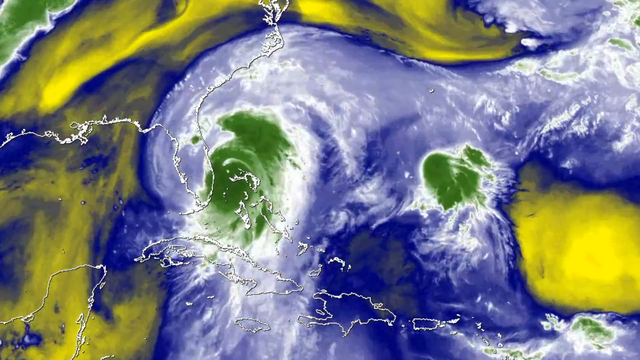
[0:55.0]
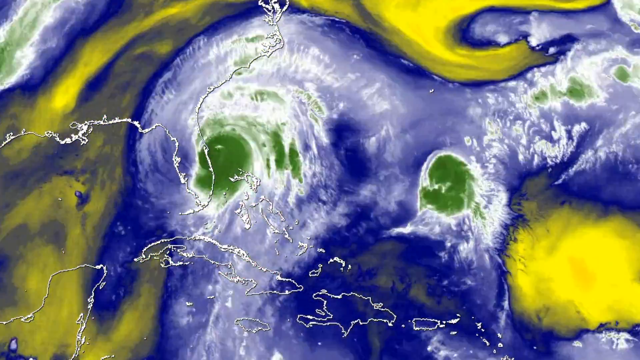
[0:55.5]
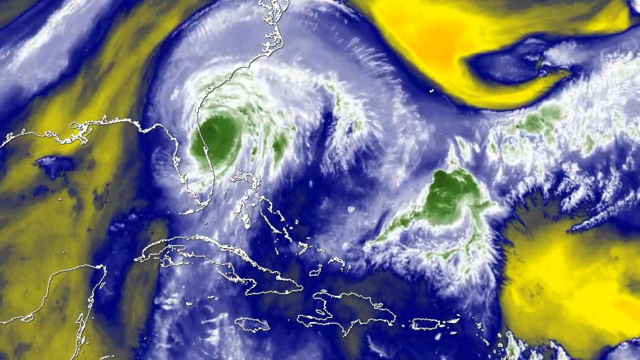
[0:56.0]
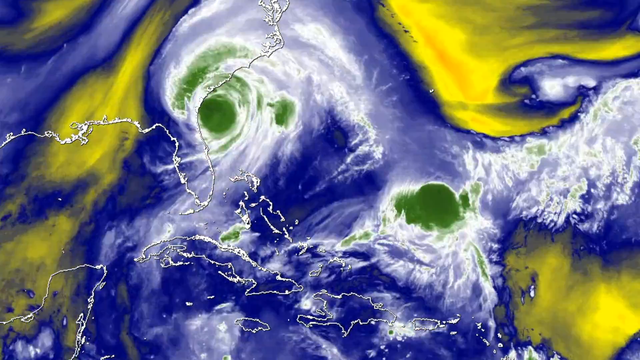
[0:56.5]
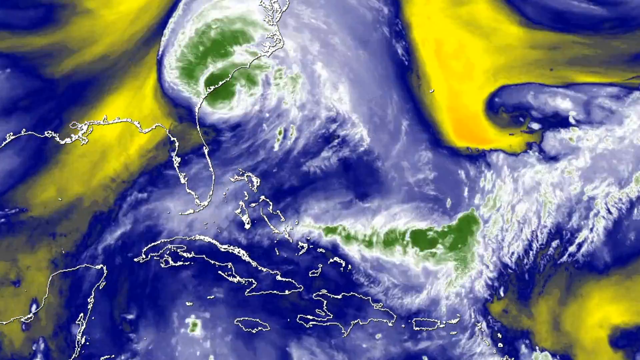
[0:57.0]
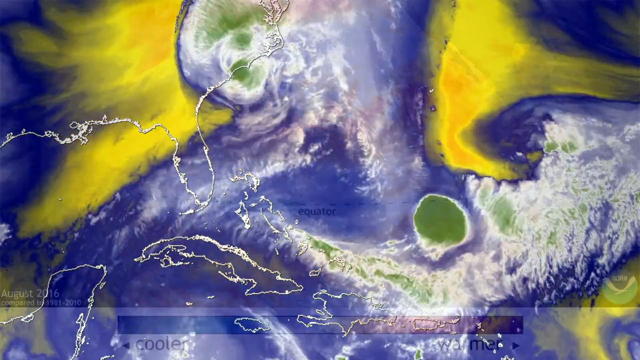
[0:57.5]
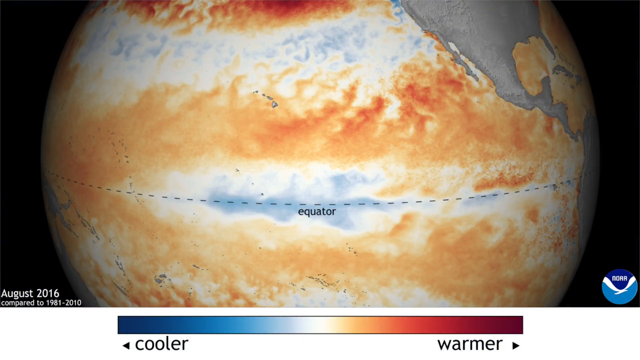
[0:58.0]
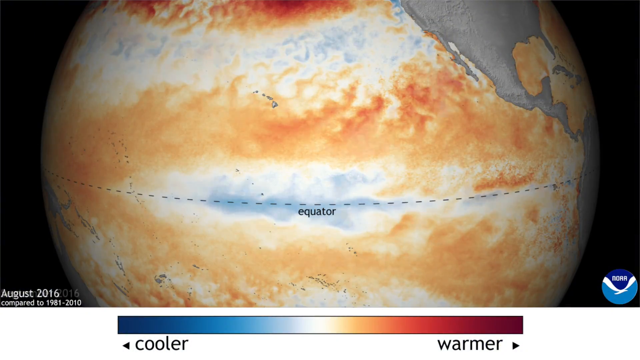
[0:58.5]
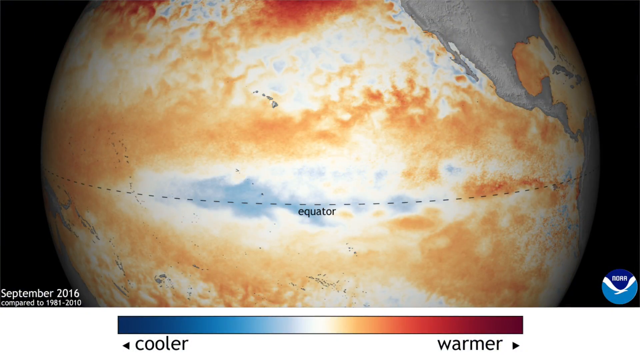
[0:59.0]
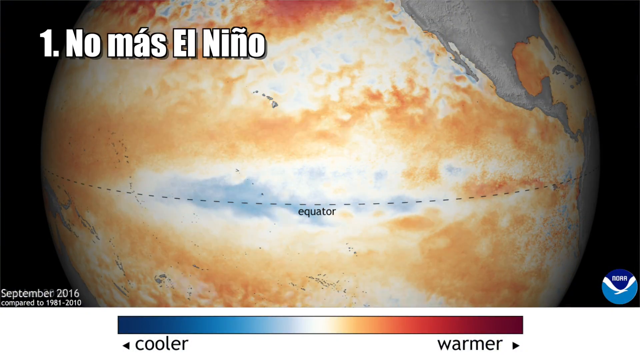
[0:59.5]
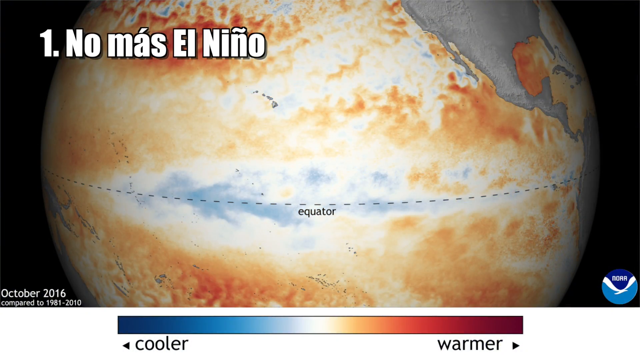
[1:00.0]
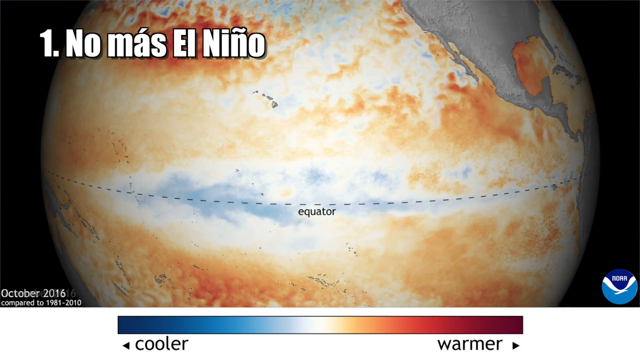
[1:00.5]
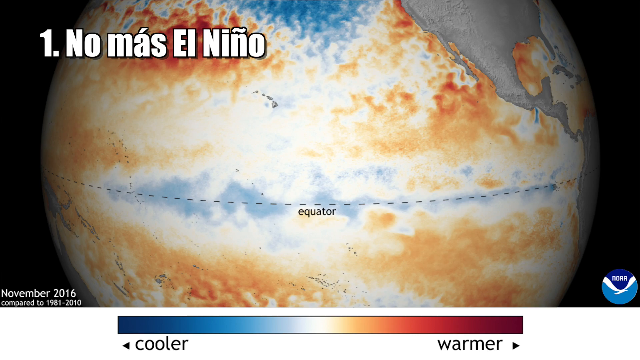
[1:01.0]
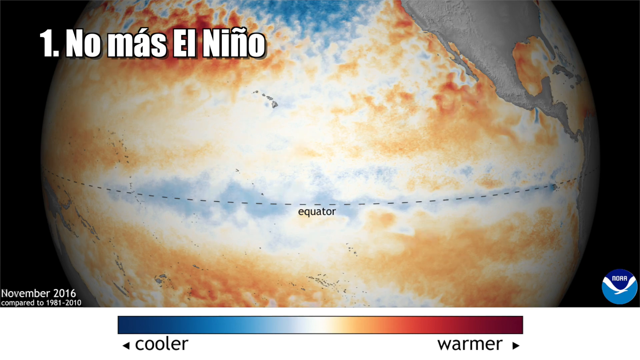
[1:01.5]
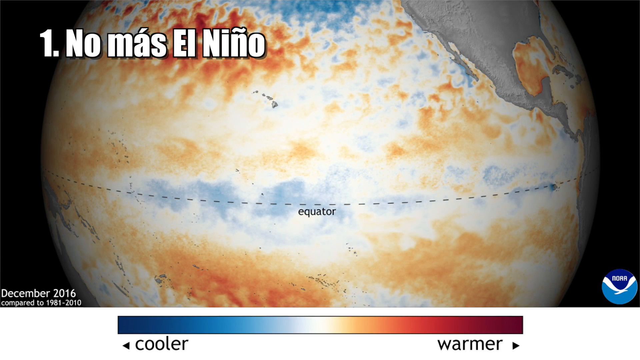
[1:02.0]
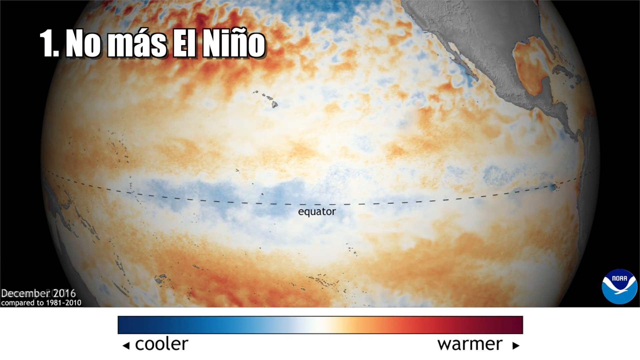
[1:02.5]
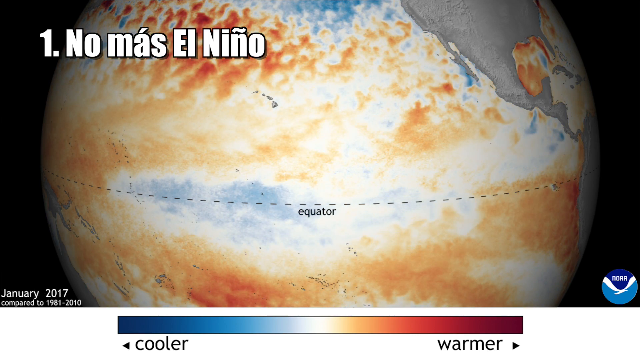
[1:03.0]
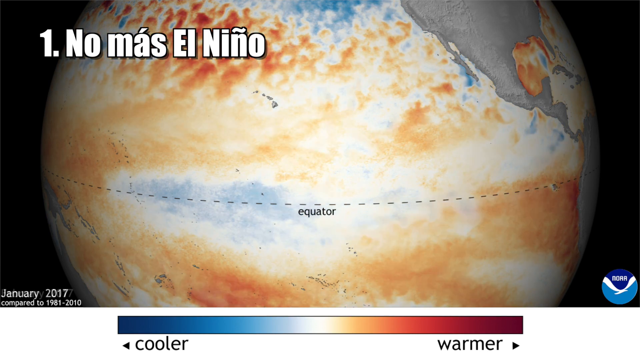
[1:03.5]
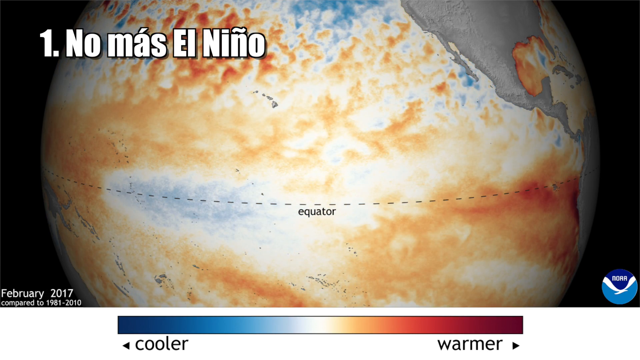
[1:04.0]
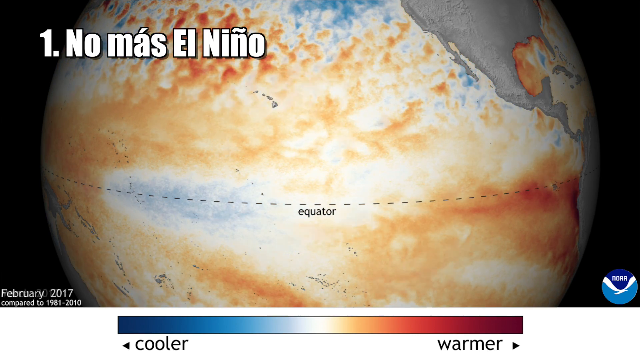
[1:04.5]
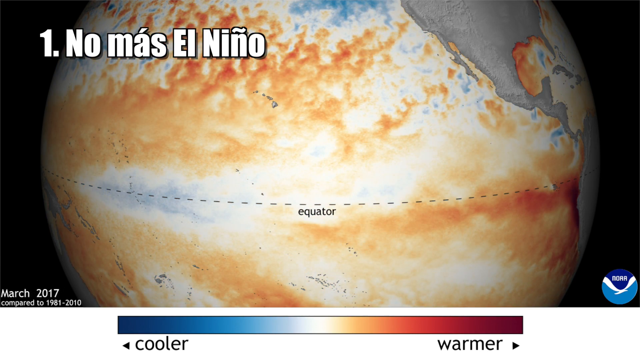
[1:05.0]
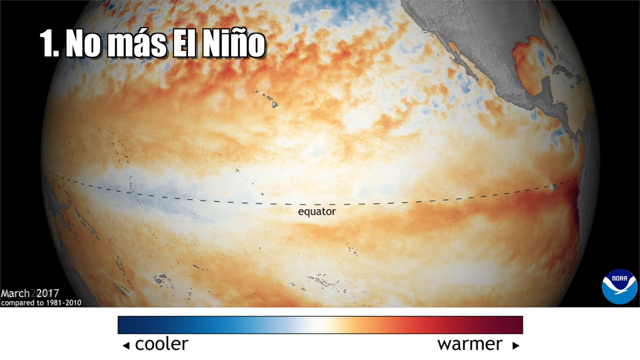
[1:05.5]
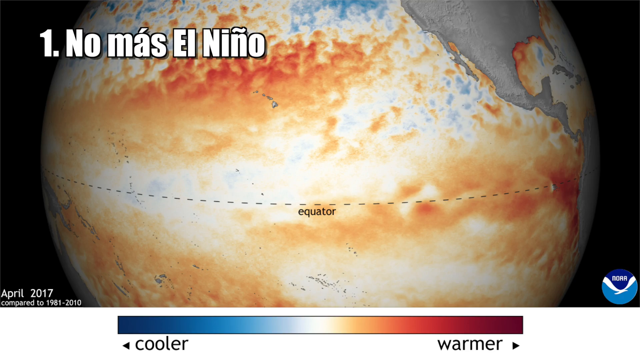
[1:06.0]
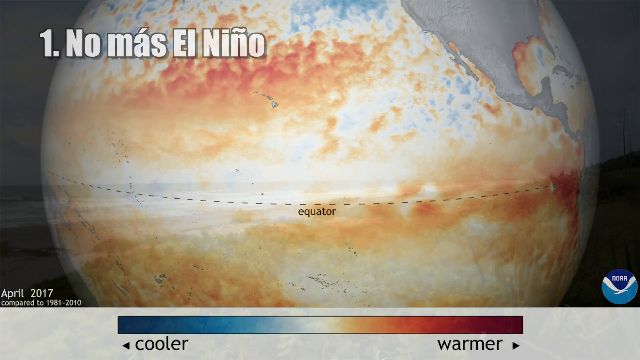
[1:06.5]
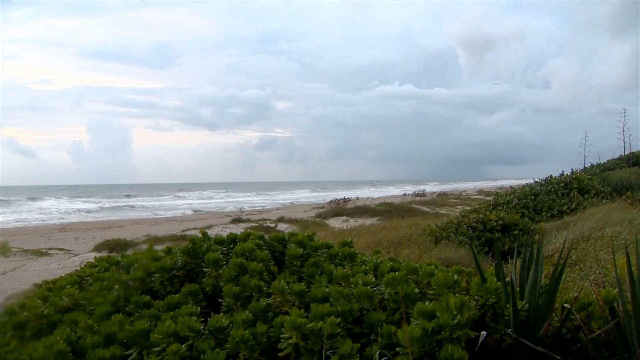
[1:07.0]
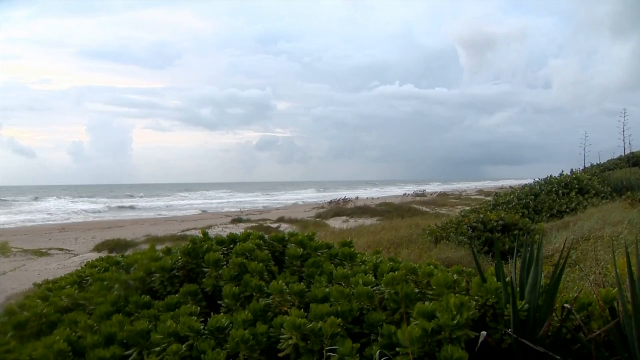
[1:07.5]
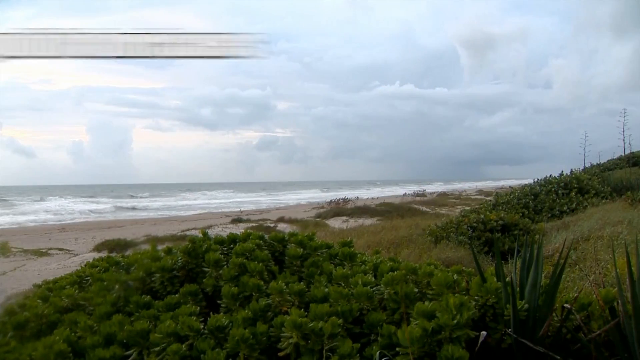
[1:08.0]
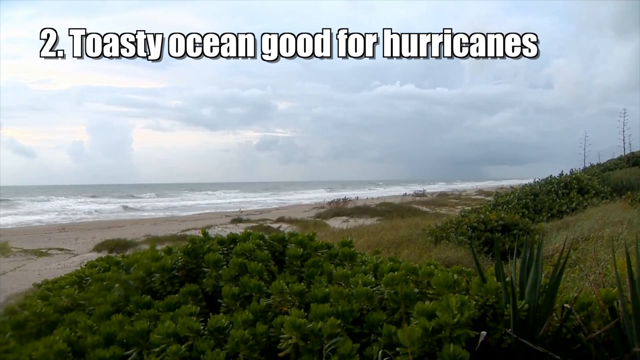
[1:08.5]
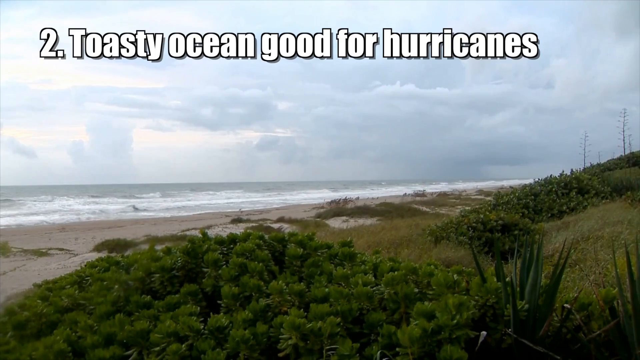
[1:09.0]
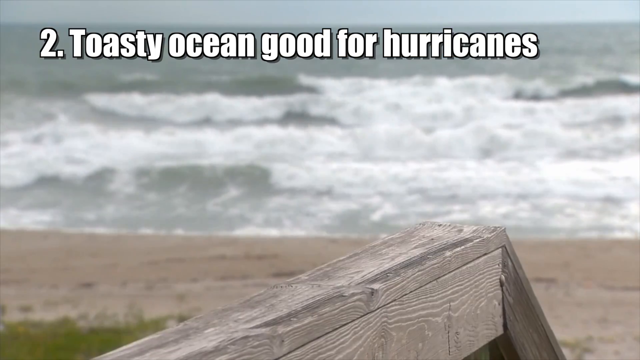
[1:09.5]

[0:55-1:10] The radar of the Atlantic shows two hurricanes heading toward the southeast of the United States. The graphic then cuts to a time-lapse infrared satellite image of El Nino, with "1. no mas El Nino" in the upper right corner. It shows the motion of what may be jet streams or clouds across the equator, with water temperatures along the equator in red and blue. A color range key at the bottom shows cooler as blue and warmer as red. The image indicates August 2016 and phases all the way through April 2017. Then "toasty ocean, good for hurricanes" appears as the second item, and the video goes to a beach with ocean water and the shore, and clouds in the distance.